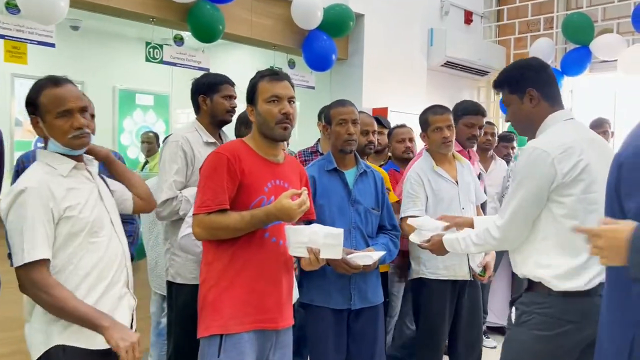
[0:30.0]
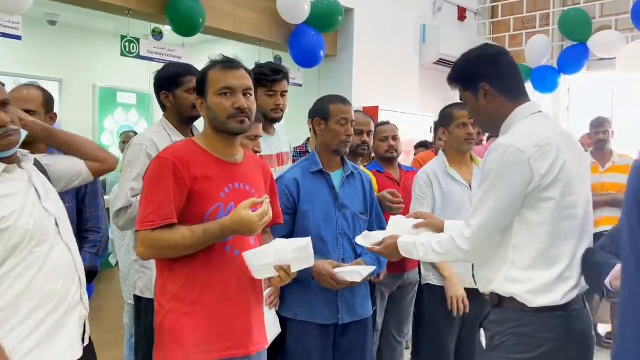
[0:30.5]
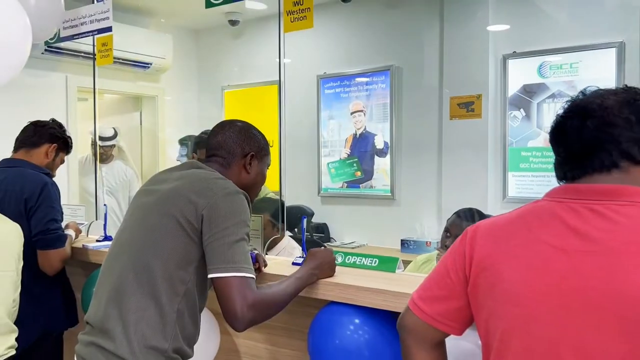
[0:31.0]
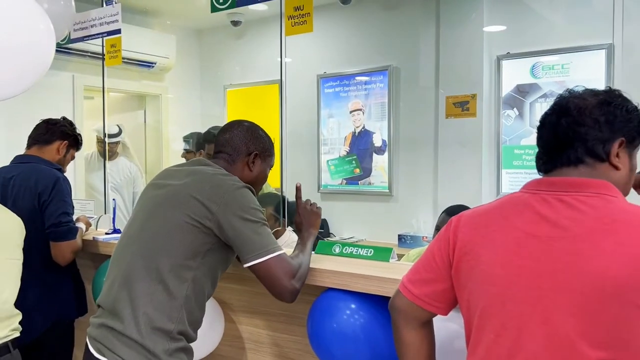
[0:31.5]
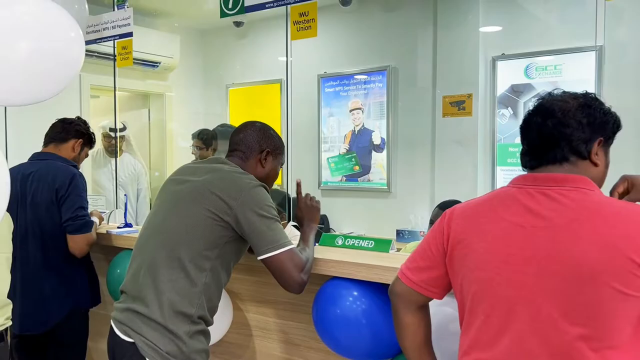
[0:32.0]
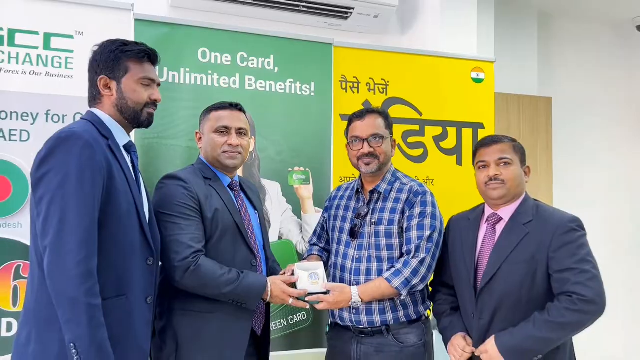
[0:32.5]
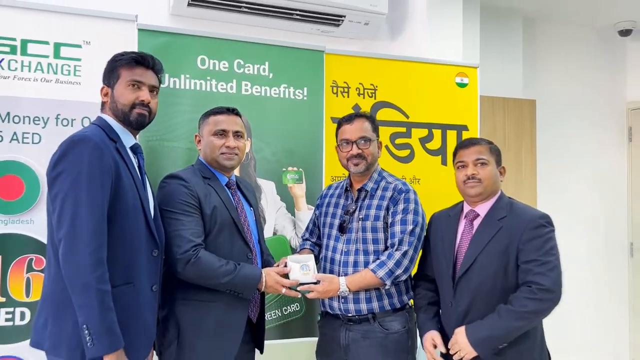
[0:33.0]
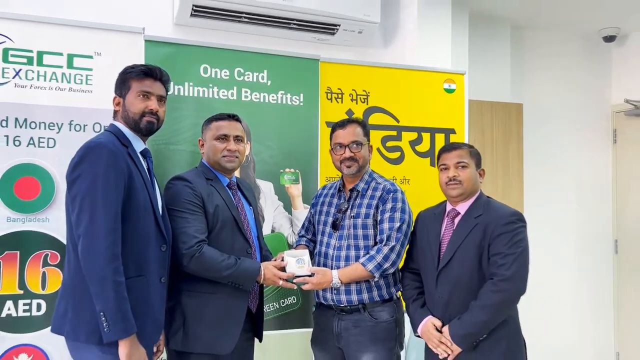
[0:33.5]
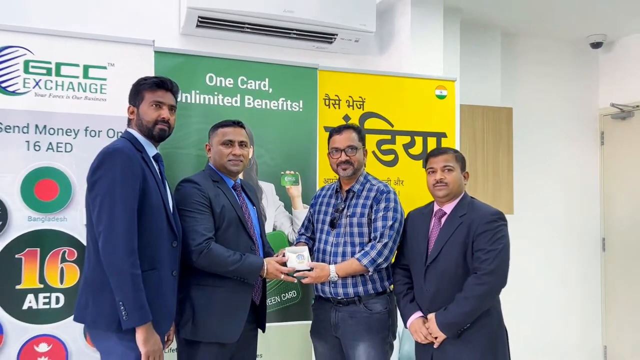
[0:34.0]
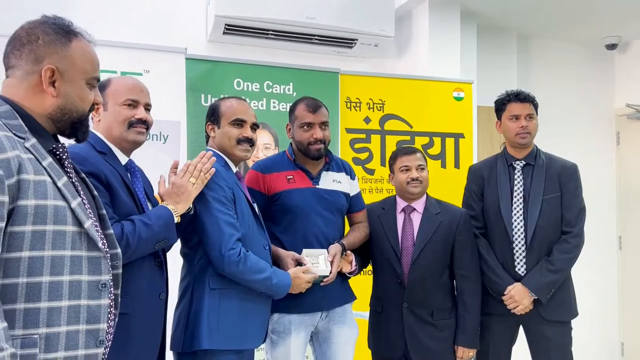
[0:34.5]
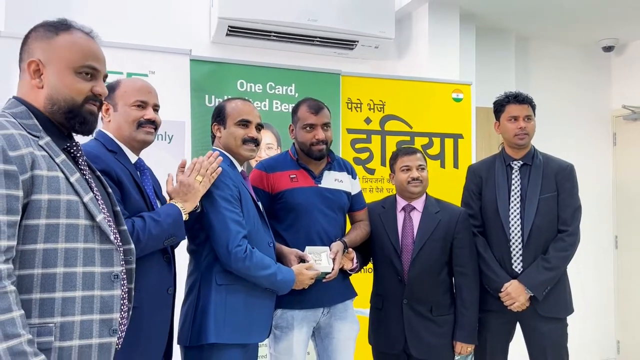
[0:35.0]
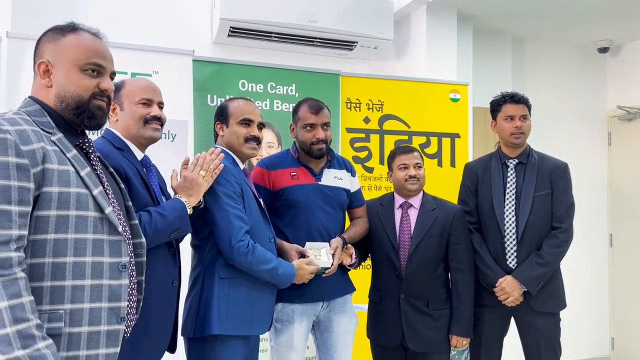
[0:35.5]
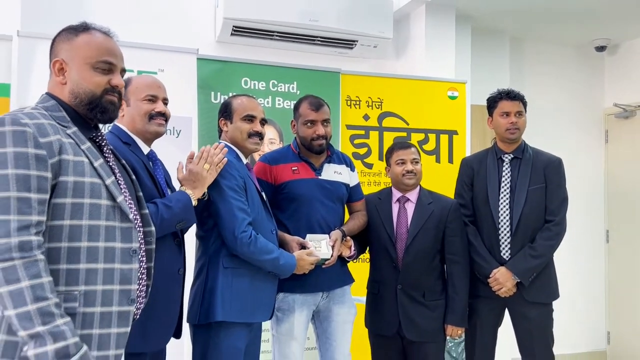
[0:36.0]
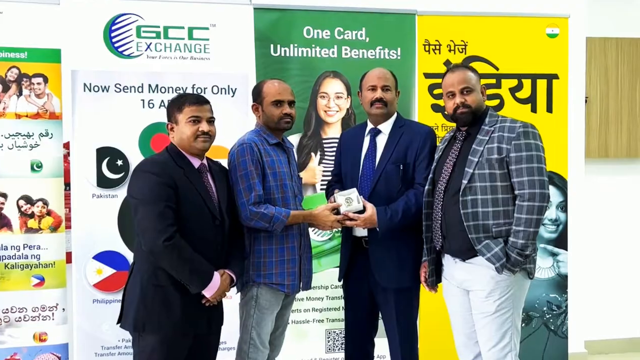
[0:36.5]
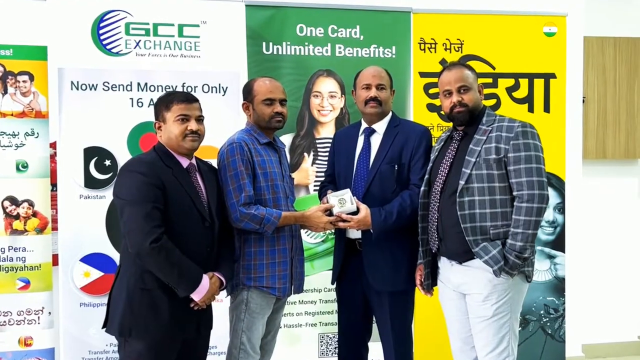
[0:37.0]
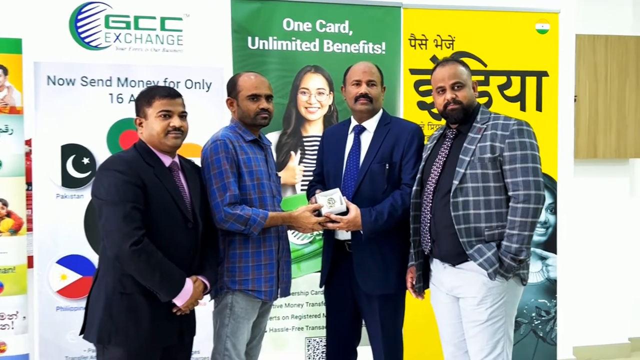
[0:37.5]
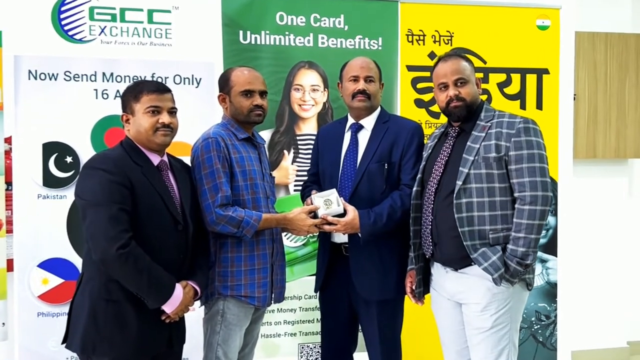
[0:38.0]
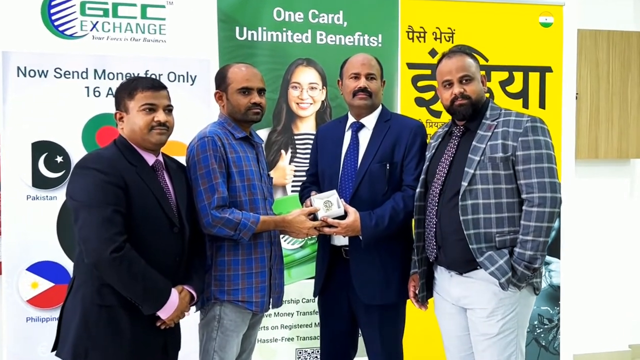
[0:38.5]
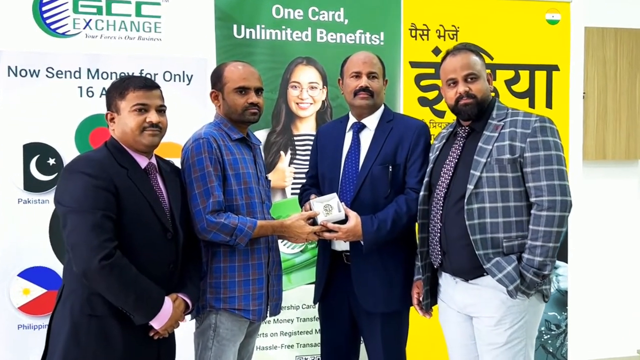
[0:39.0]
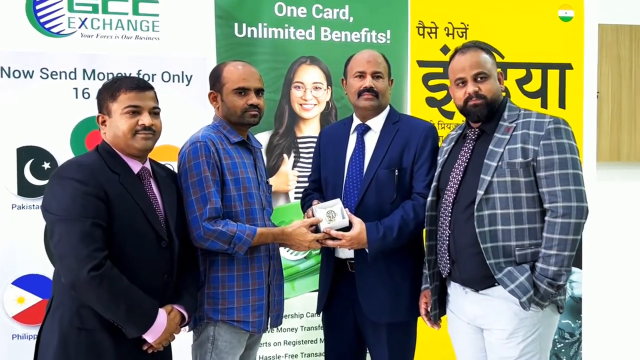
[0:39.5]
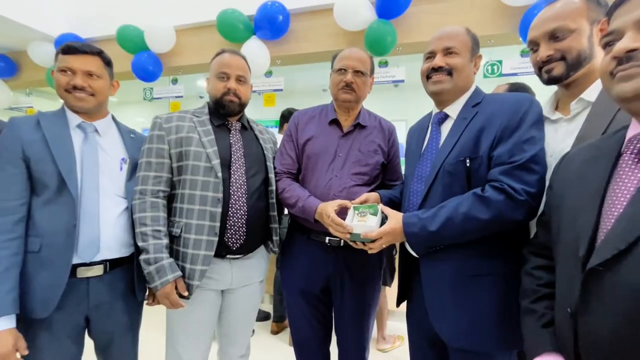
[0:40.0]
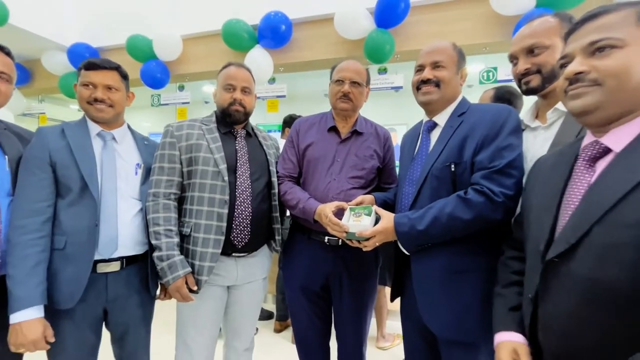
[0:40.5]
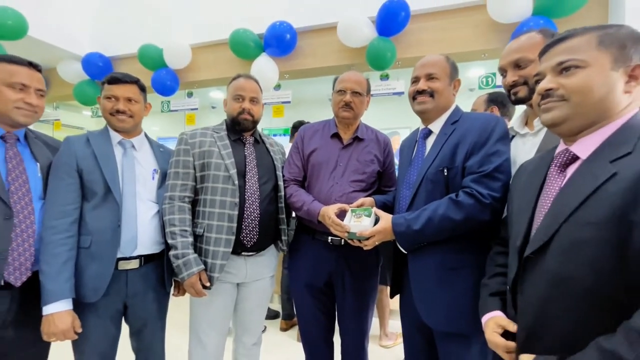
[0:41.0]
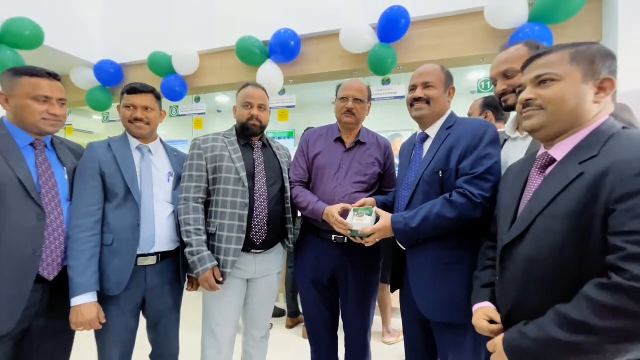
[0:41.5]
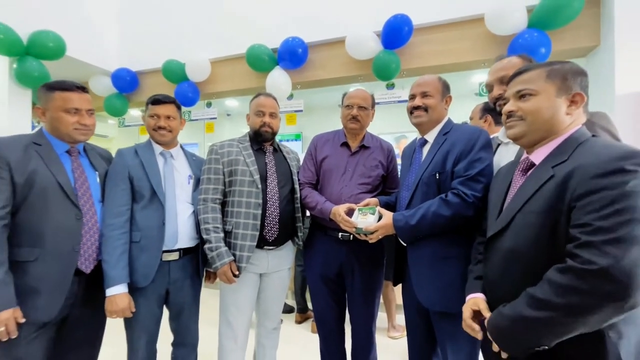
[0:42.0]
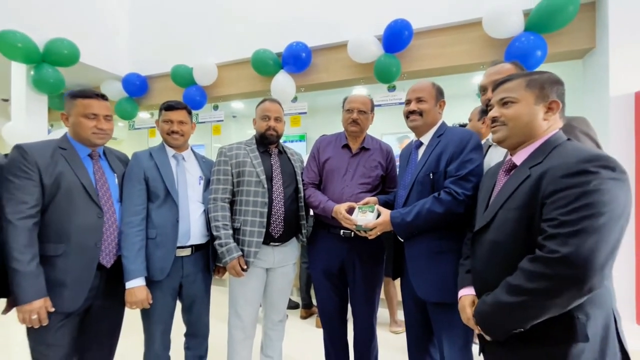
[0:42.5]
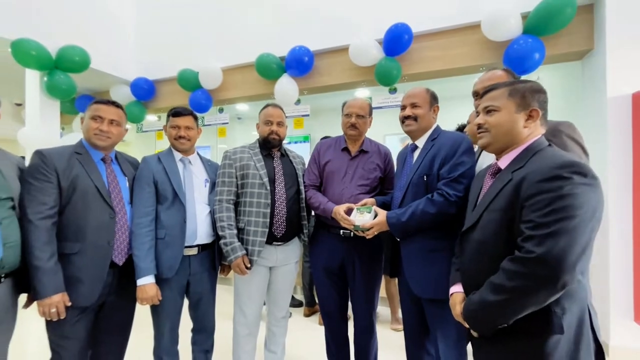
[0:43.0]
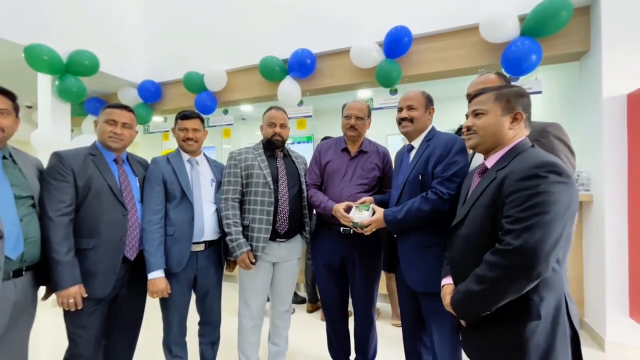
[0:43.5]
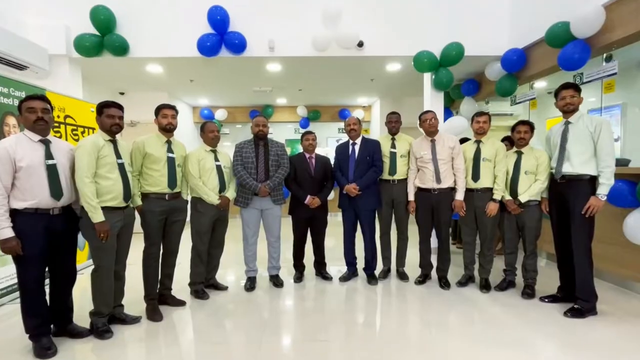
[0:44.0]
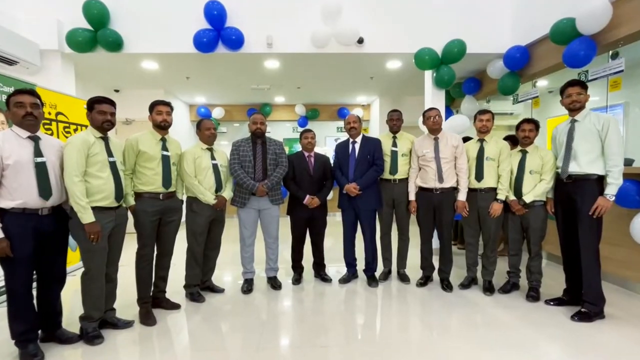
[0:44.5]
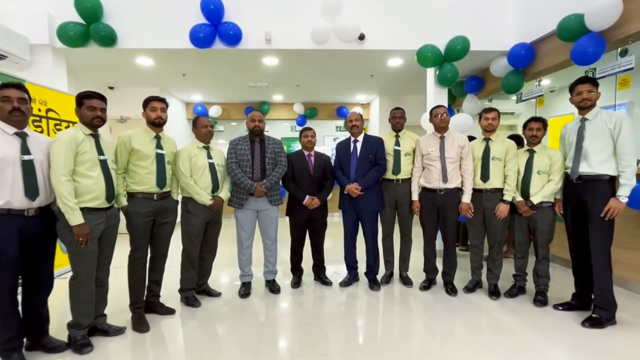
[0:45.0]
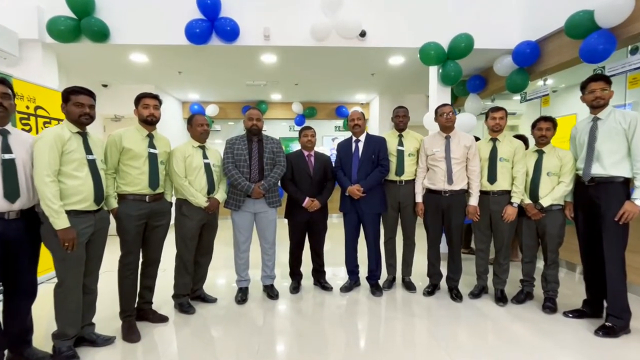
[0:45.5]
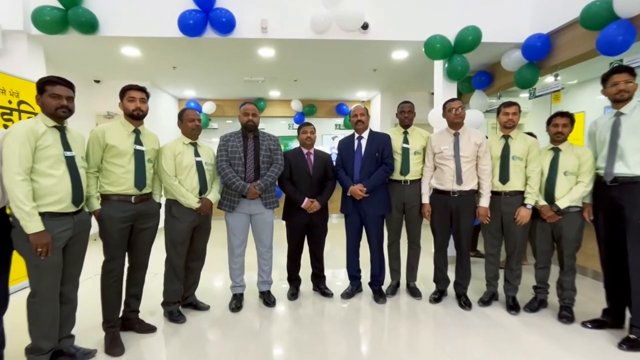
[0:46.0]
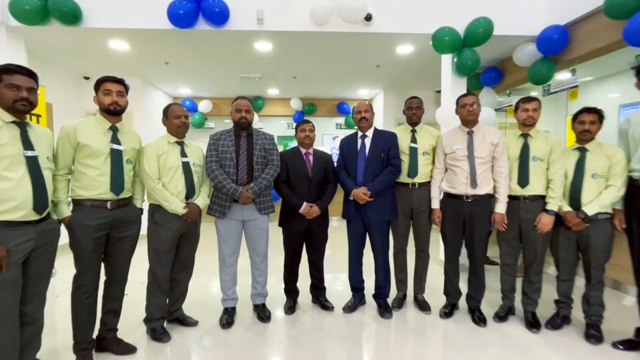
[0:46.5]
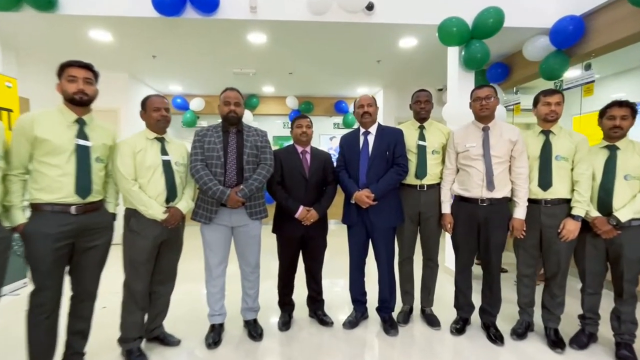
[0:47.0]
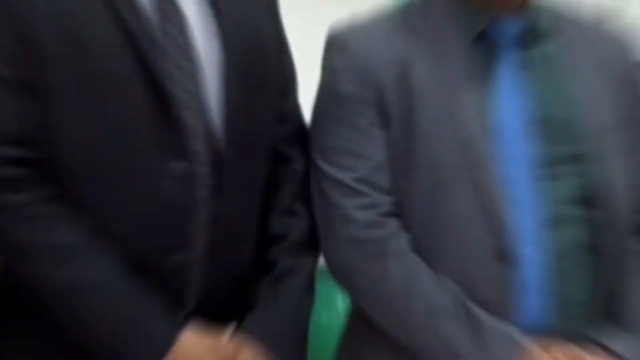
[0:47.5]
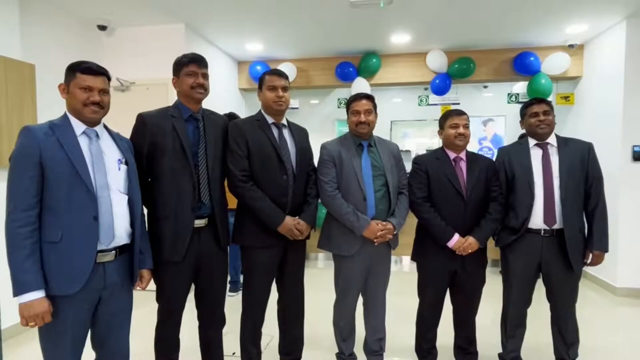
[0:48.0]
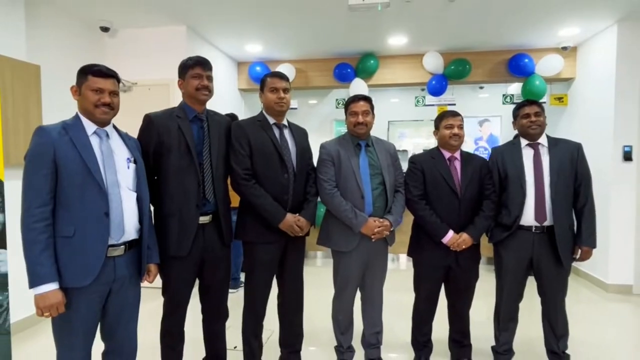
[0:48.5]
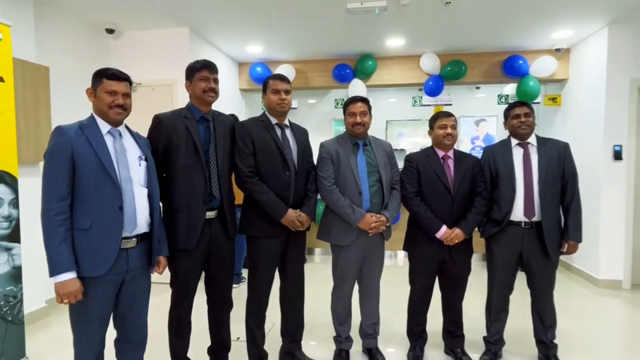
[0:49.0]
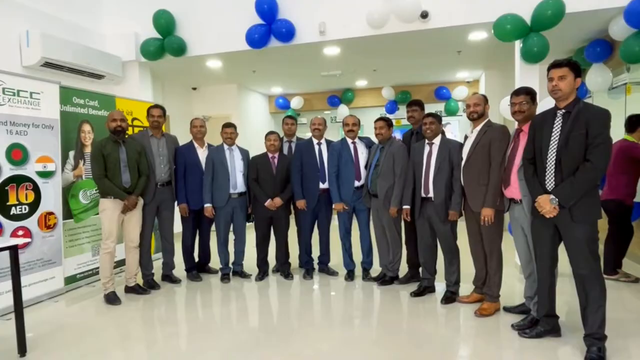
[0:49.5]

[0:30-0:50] People appear to be voting at what look like voting booths, with three men in view. The video quickly cuts to three men in suits and one man in a blue and white plaid shirt holding what is perhaps a trophy. In the background there is possibly some Indian text and a sign that says "one card unlimited benefits." The four men pose for the camera, celebrating the opening of the GCC Exchange store, as the camera slowly zooms in on them. The video cuts to more men in suits, with the two men in the middle holding something in their hands. It cuts again to many men wearing shirts and ties in light pink and light yellow, with three men in full suits in the middle of them. The camera slowly zooms in and then out on the group, possibly board members, directors or managers of the chain.